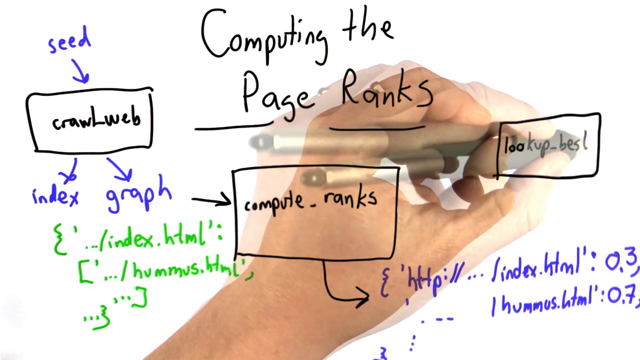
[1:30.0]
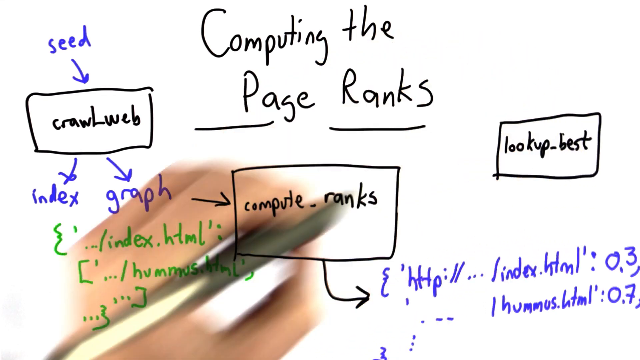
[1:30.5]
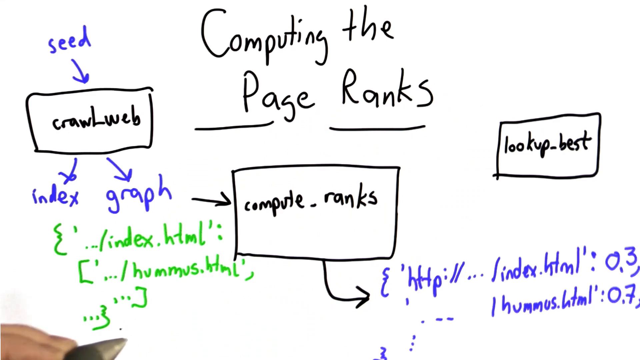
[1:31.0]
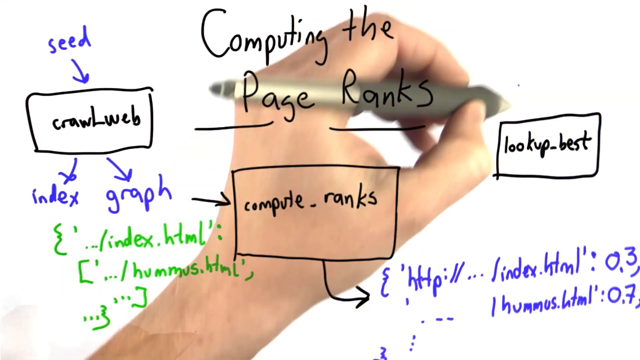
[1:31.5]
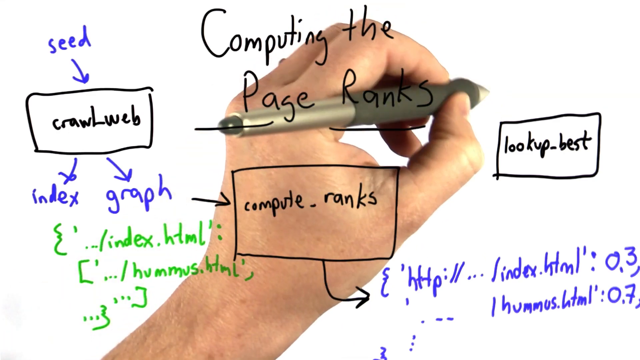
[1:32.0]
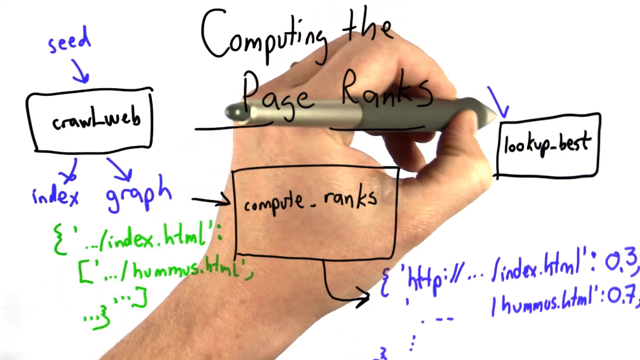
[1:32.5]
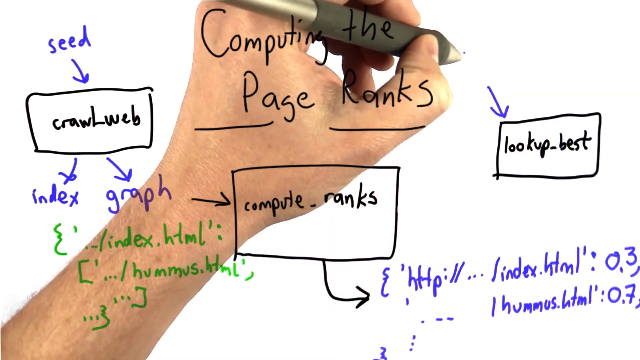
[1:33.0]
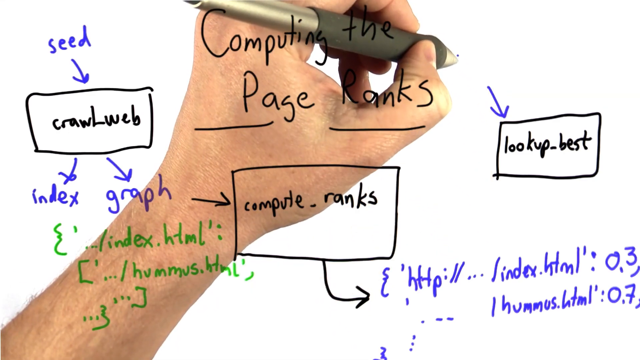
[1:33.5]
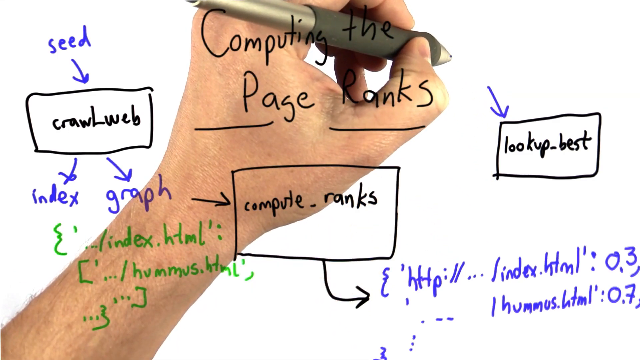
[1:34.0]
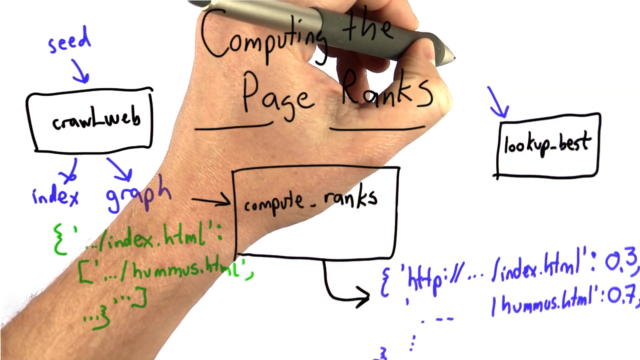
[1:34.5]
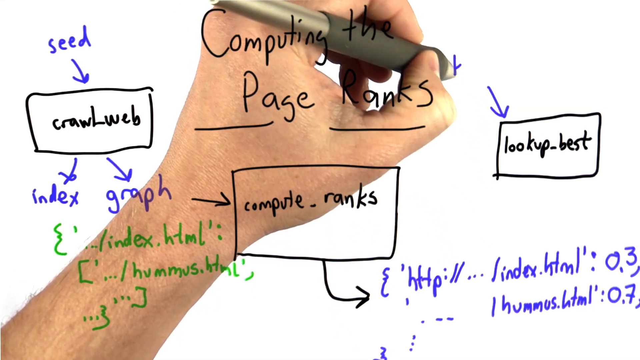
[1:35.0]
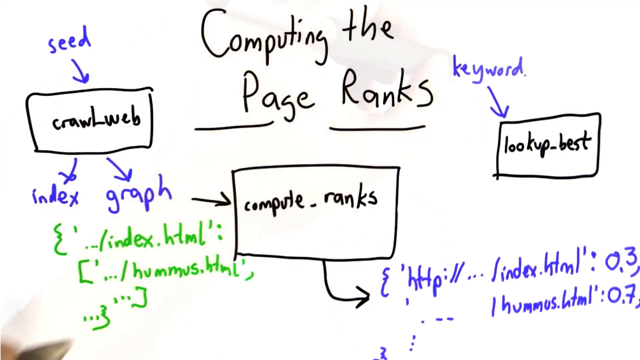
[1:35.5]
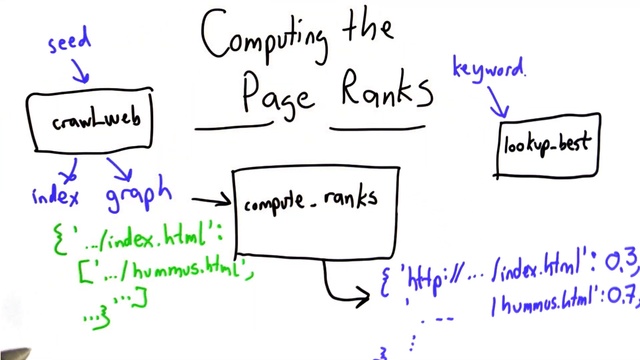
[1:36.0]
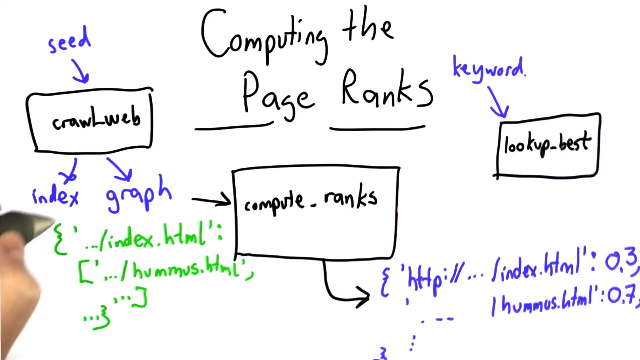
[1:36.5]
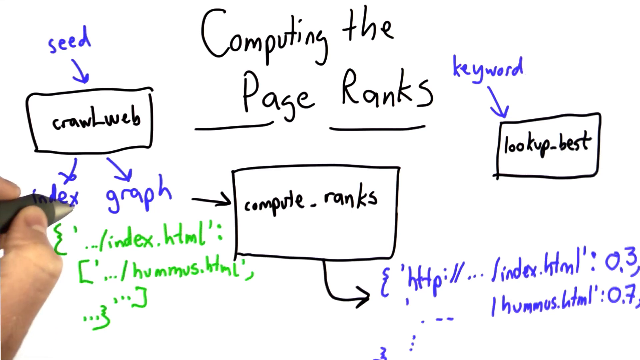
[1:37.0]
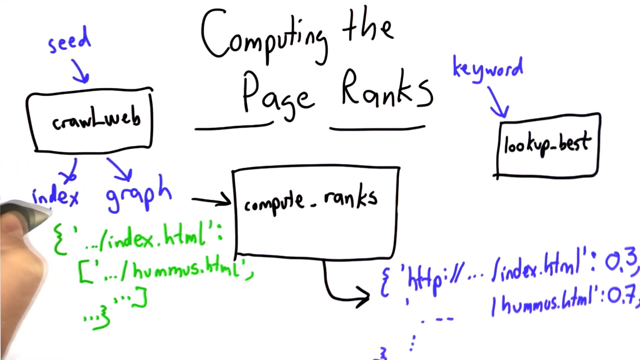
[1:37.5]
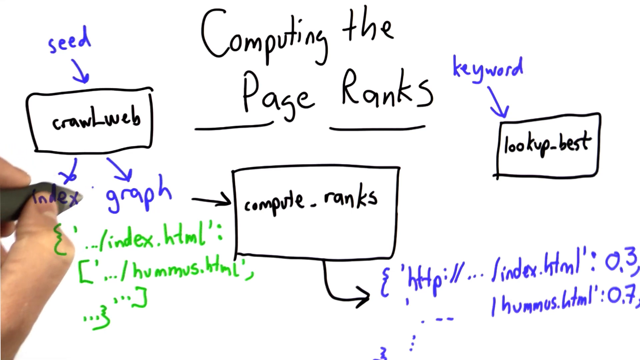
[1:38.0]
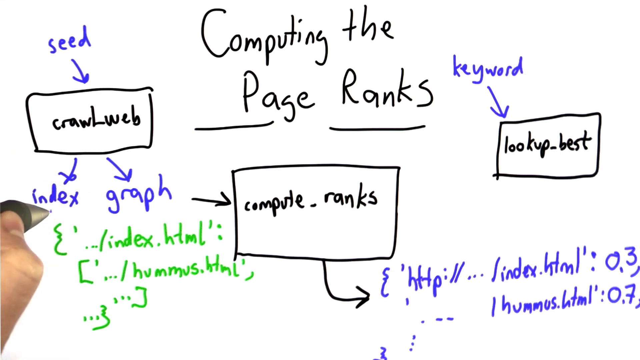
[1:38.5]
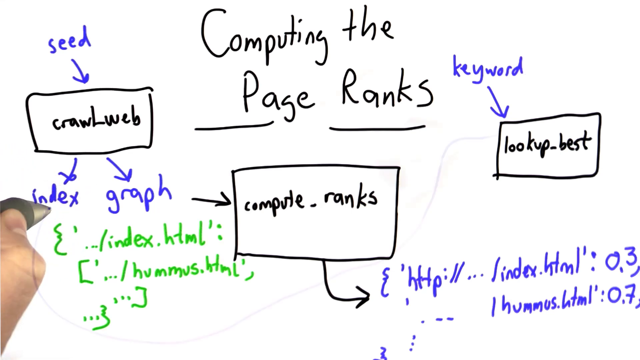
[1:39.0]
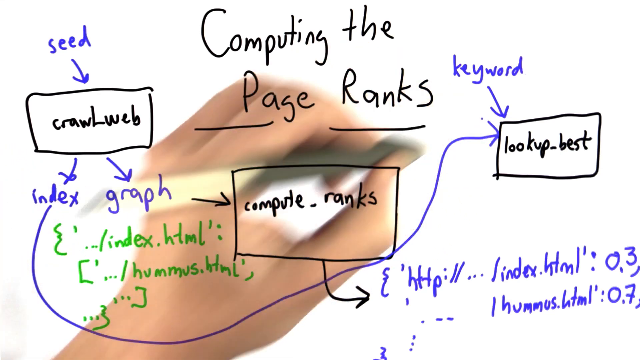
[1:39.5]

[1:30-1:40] The graphic on the right has "keyword" drawn in blue with an arrow pointing down to "lookup best." An arrow runs across the entire image from the index to lookup best. The overall layout shows the seed on the left side along with the index and the graph, the code on the right side with lookup best among the last drawn frames, and Compute Ranks in the middle.